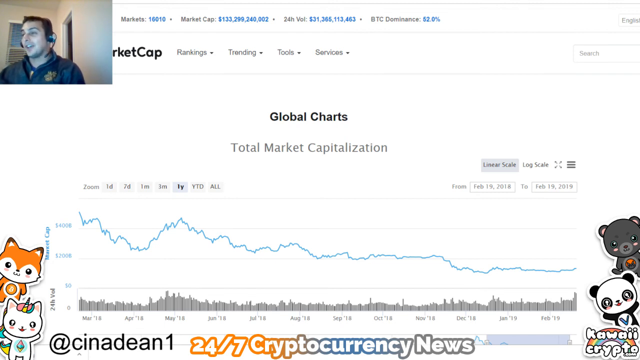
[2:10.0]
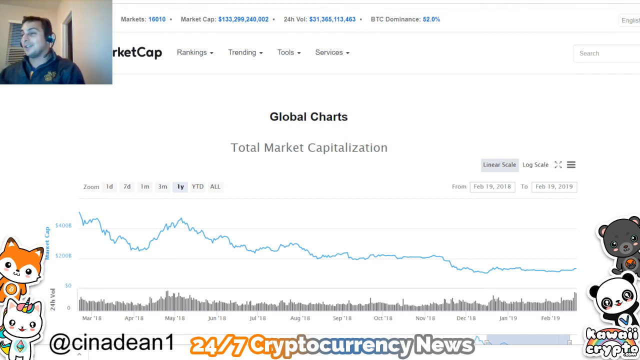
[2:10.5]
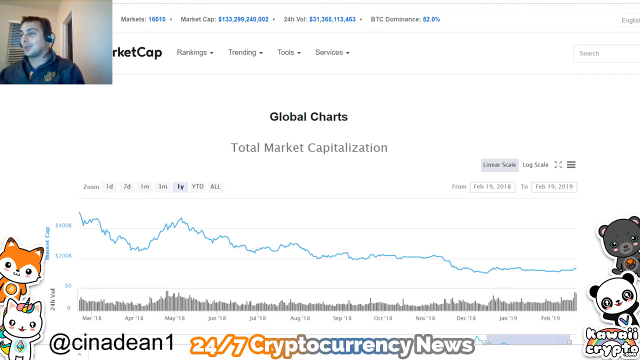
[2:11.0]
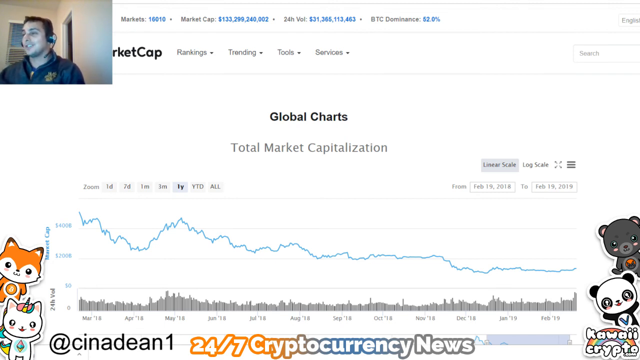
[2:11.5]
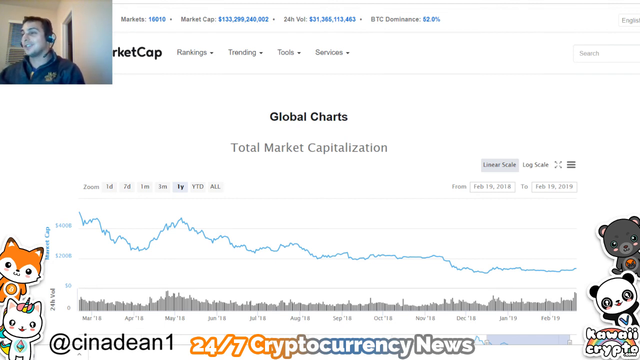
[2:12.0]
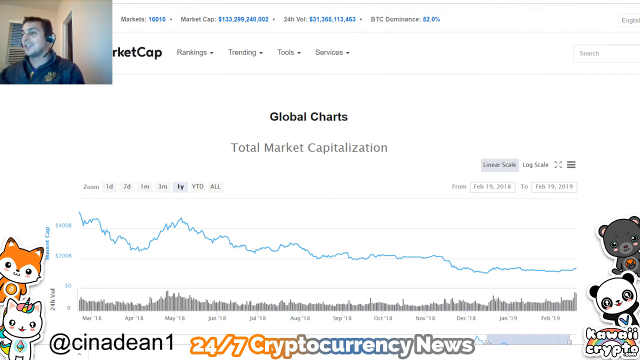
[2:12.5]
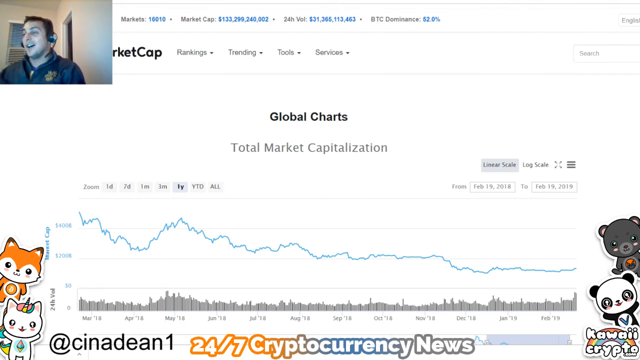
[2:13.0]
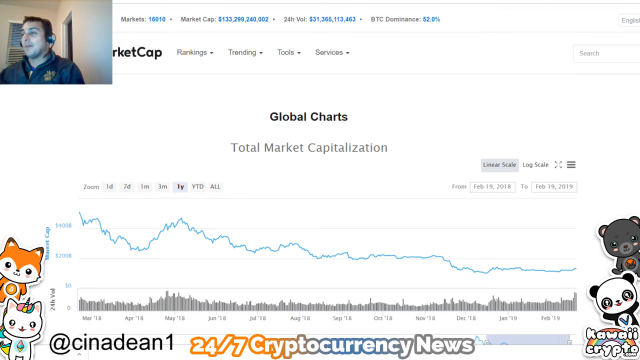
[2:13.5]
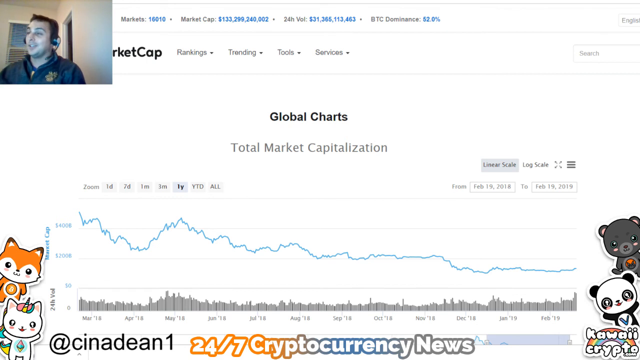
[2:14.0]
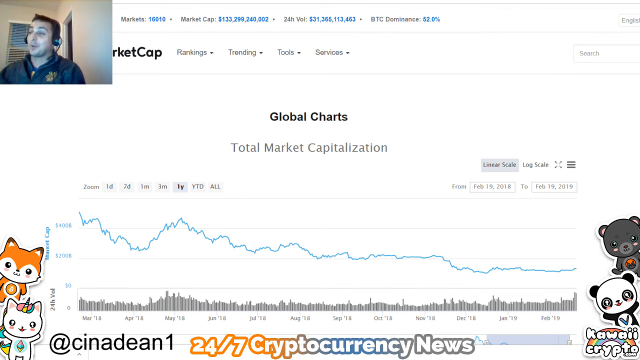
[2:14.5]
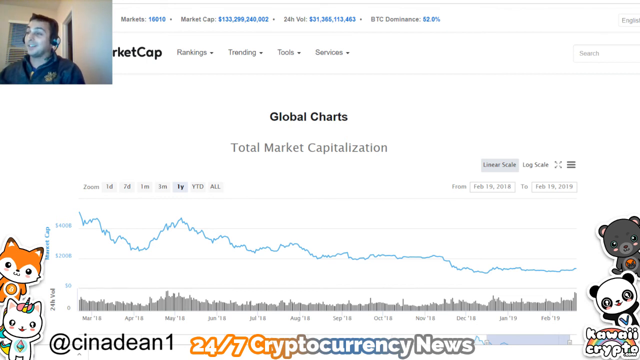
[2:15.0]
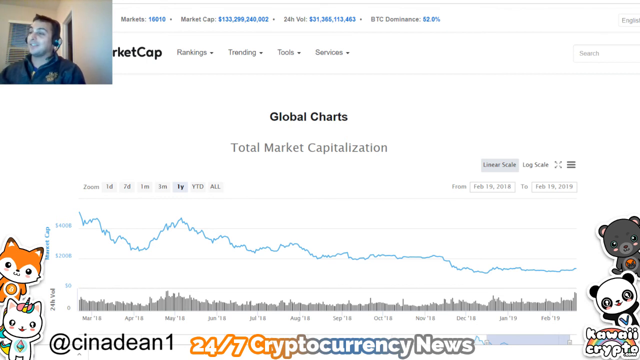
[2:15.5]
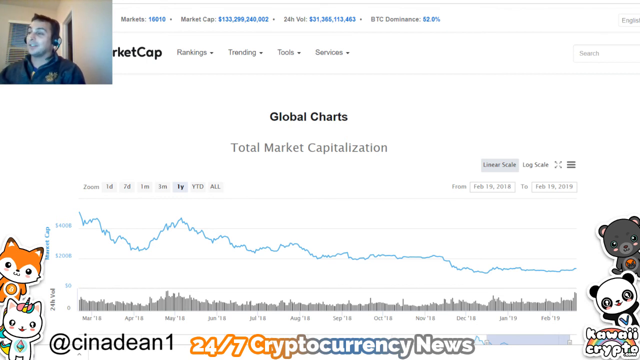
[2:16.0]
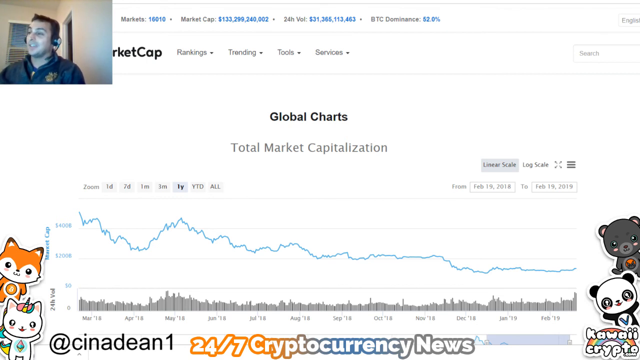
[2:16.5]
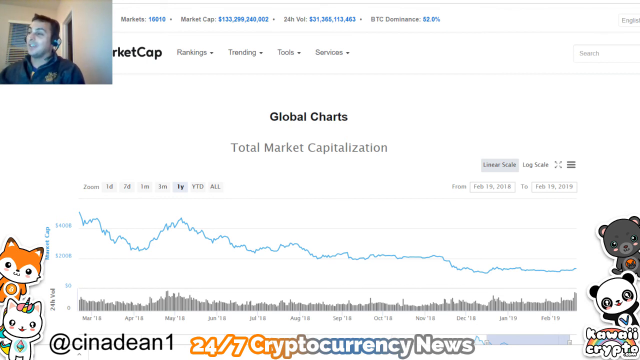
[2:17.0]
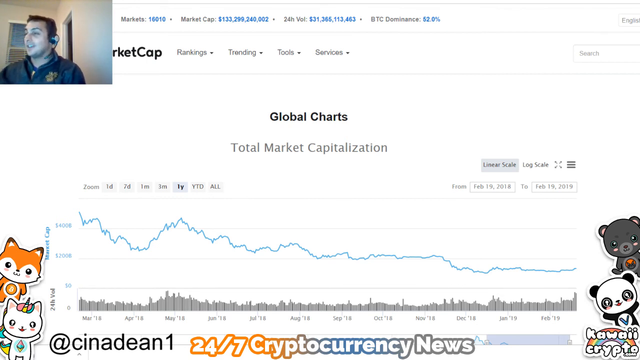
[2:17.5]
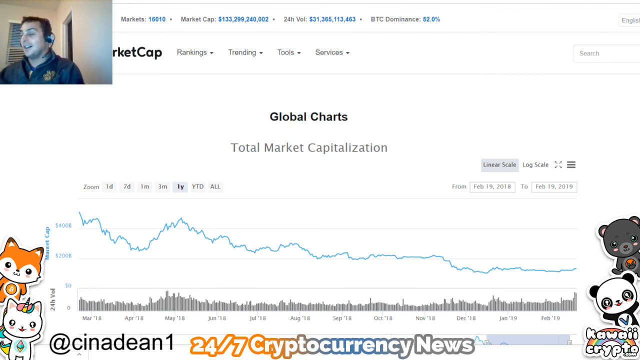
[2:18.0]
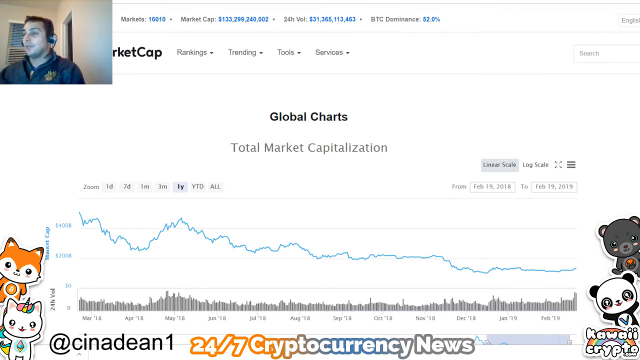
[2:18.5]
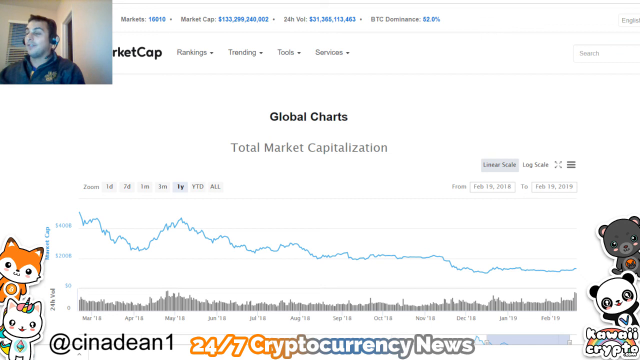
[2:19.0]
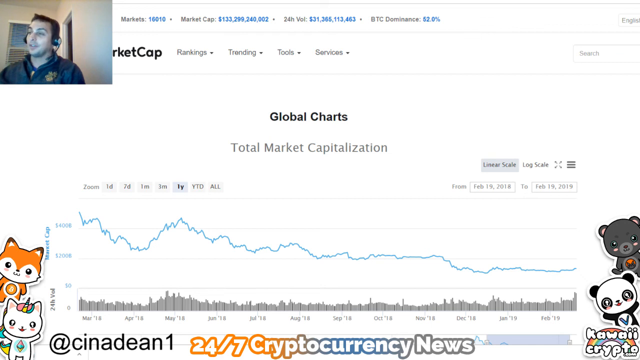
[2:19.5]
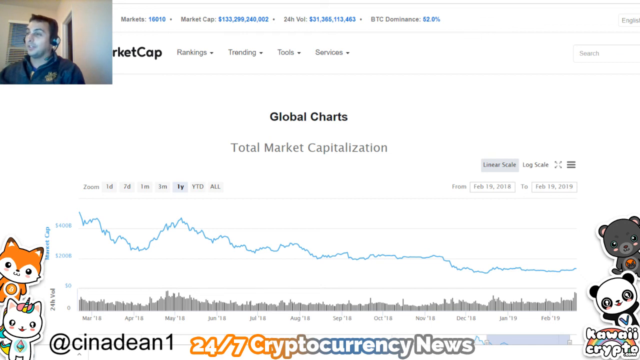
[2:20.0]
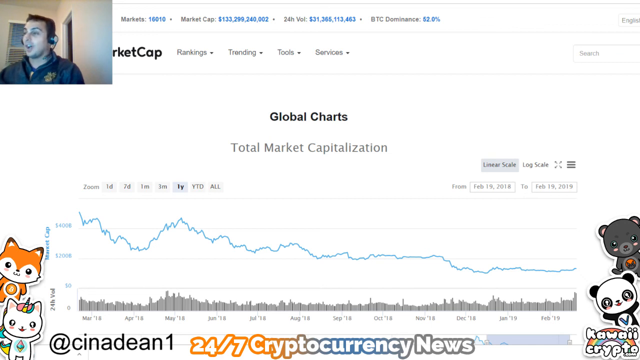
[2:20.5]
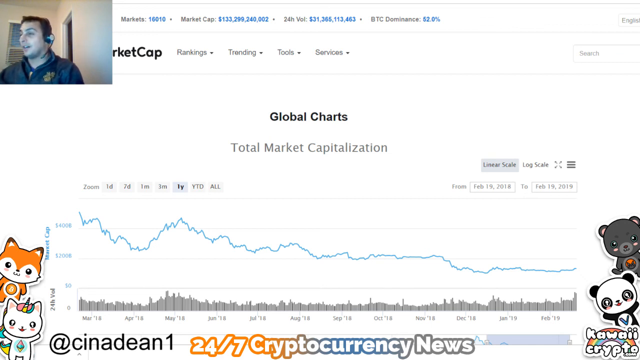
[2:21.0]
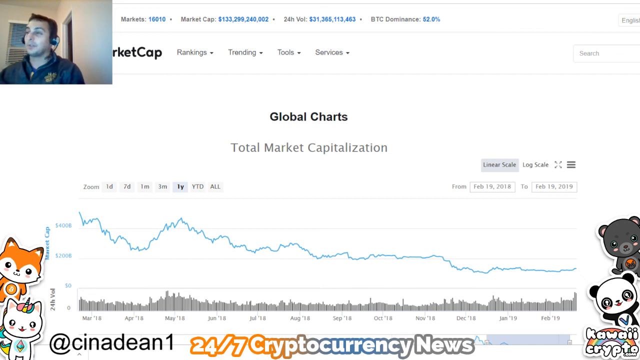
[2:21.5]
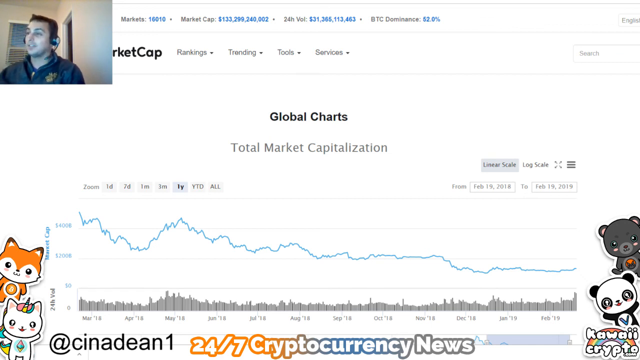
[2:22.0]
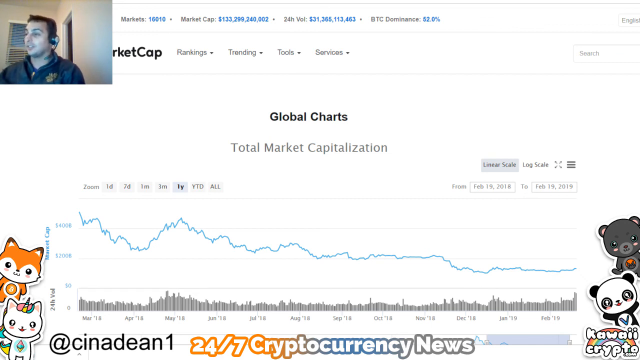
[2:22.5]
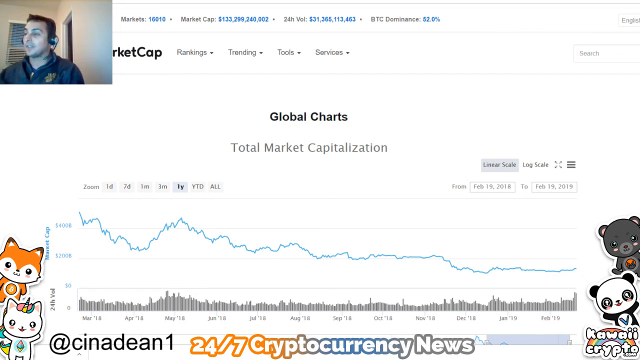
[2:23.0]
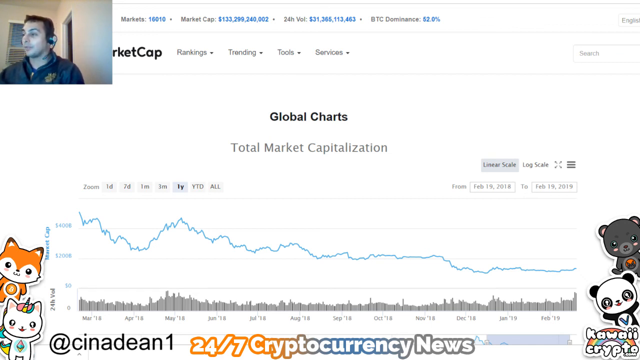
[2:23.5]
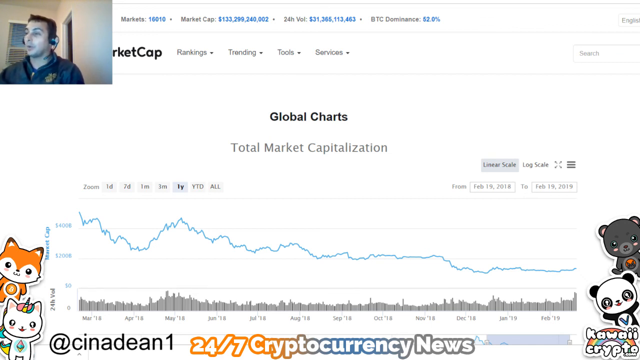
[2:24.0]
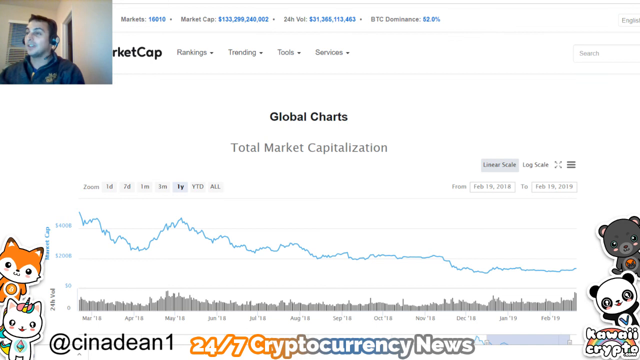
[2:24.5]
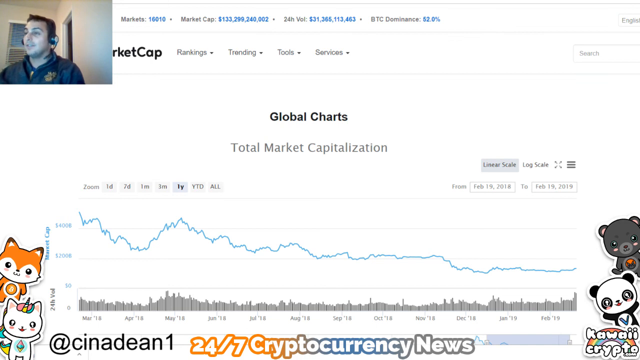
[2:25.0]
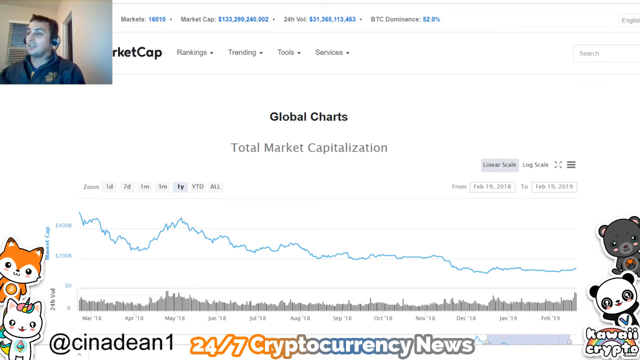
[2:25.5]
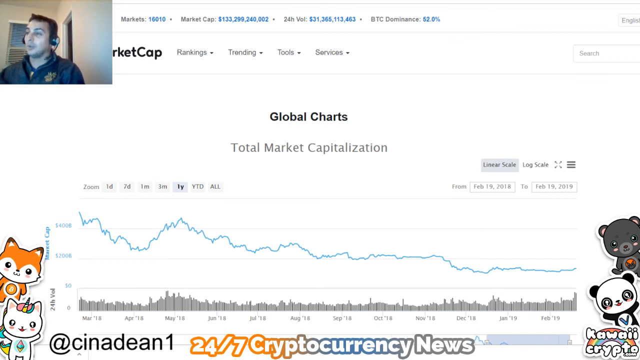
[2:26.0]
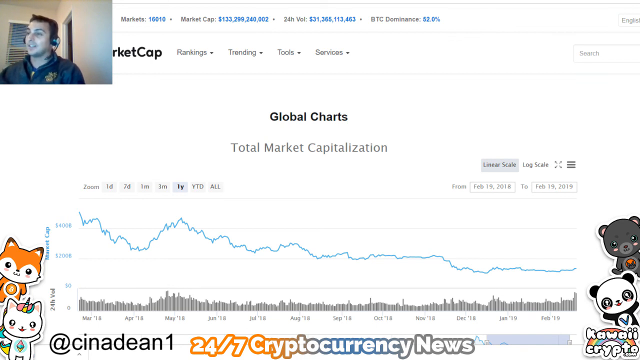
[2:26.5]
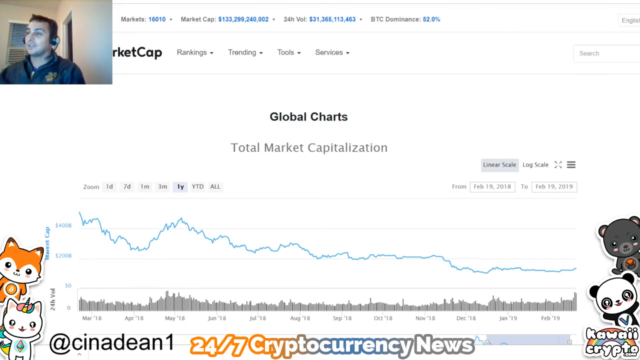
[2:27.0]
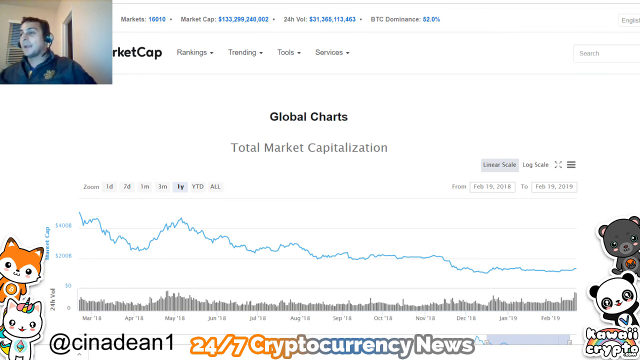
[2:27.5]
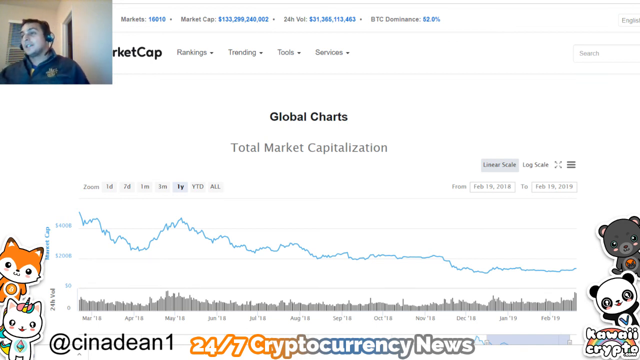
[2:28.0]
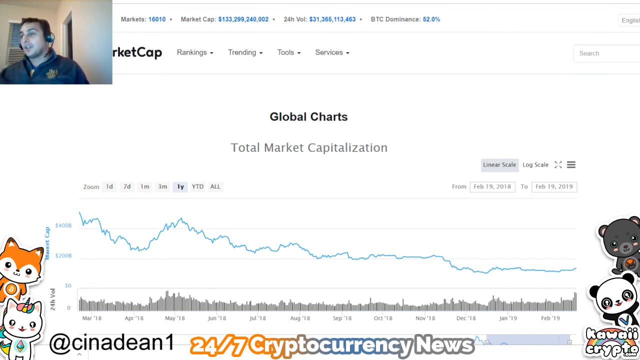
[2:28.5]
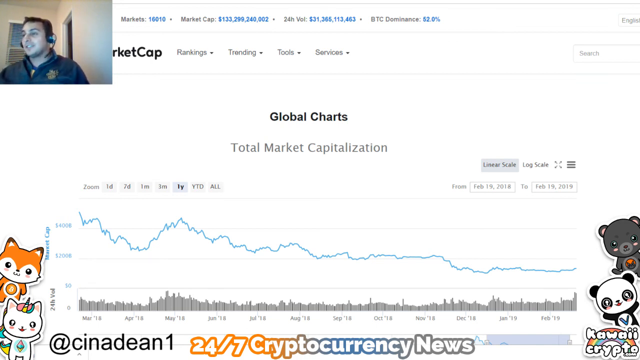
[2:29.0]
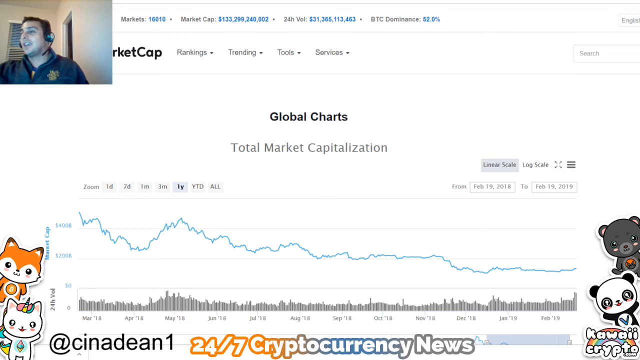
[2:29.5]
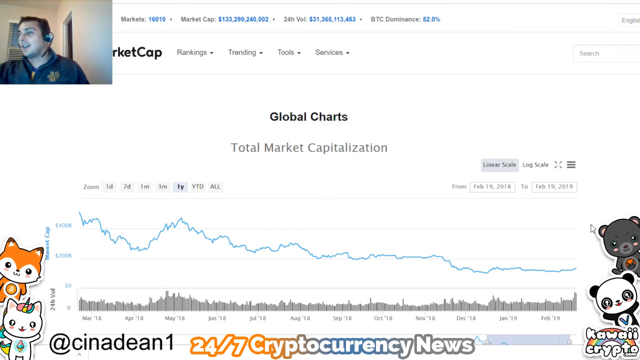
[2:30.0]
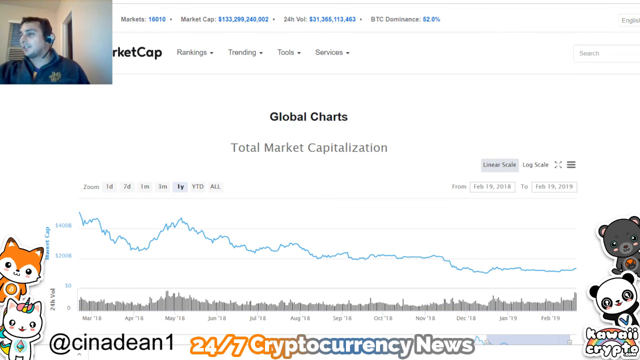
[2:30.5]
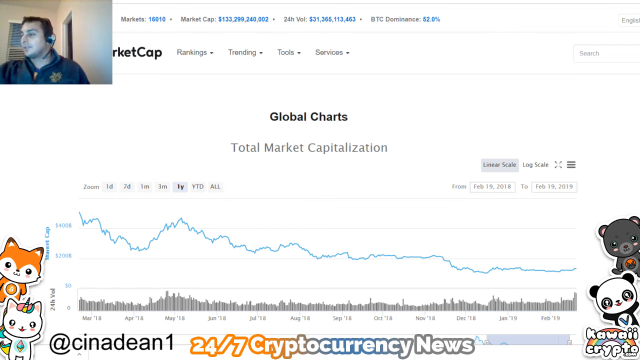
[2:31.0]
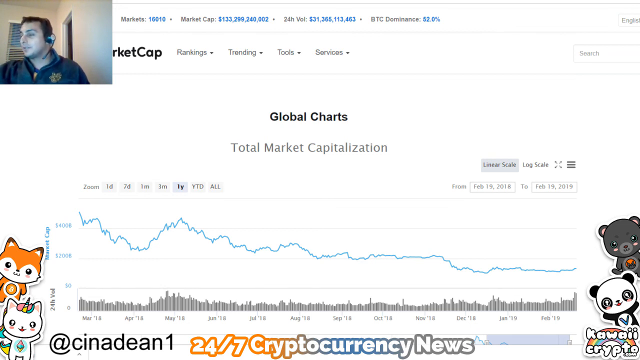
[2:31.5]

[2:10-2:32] The four kawaii crypto bears are on screen, two on the left and two on the right: a fox and a unicorn on the left, a koala and a panda on the right. At the top left is a webcam of the host talking and commenting on the total market capitalisation global chart showing its evolution over one year. The screen recording does not change; only the webcam changes, with the man's slight hand gestures and slight facial expressions.